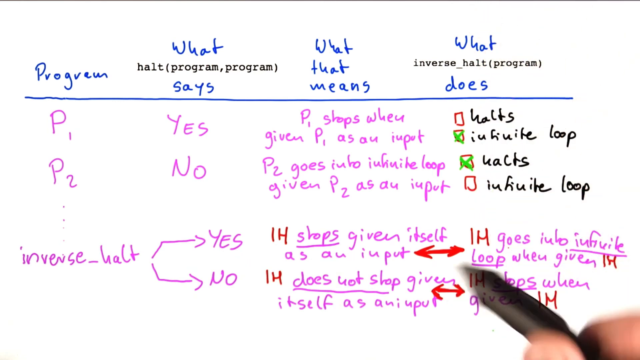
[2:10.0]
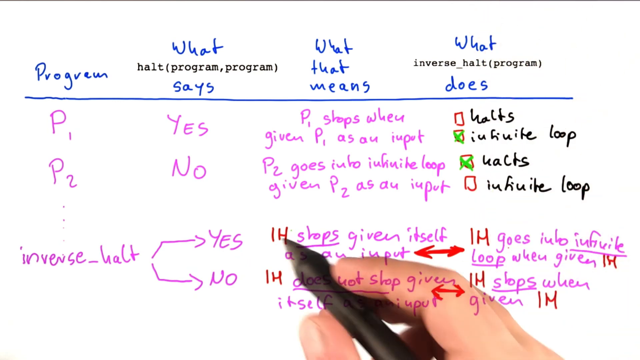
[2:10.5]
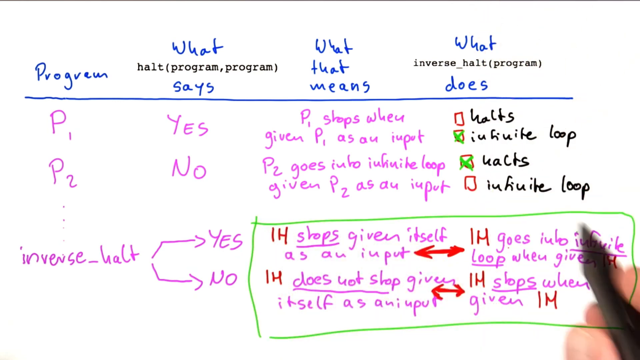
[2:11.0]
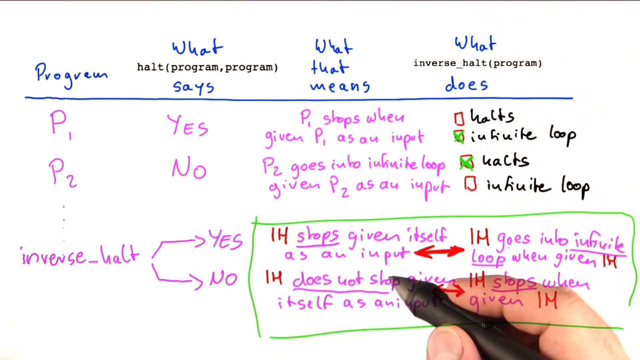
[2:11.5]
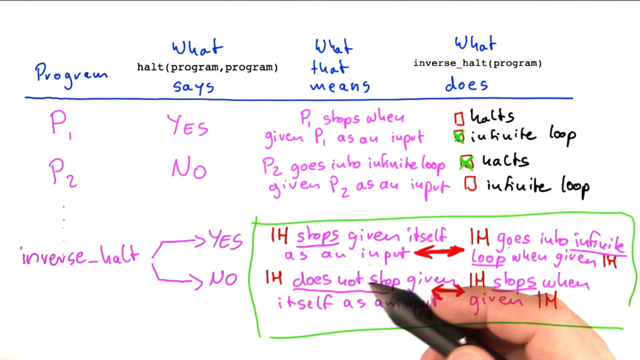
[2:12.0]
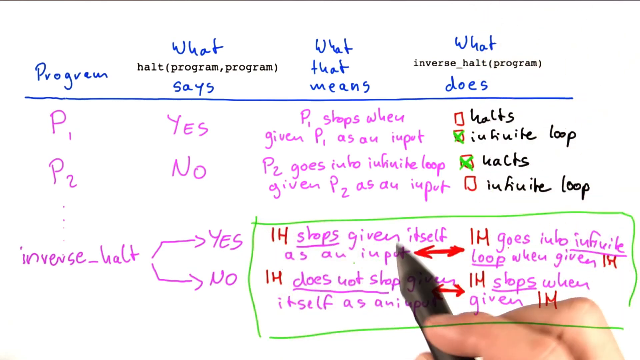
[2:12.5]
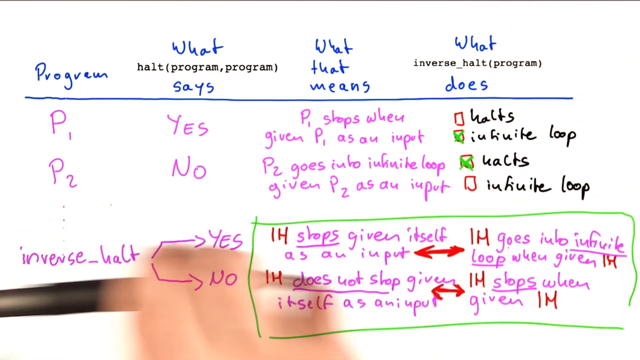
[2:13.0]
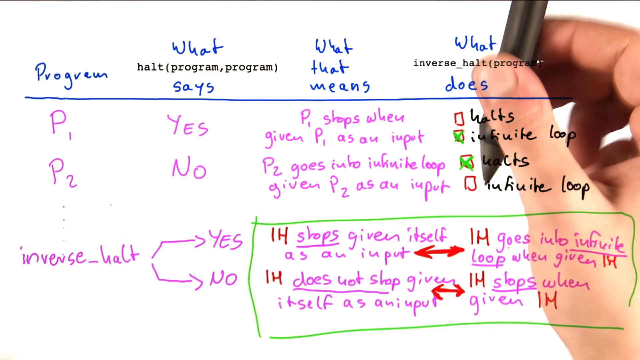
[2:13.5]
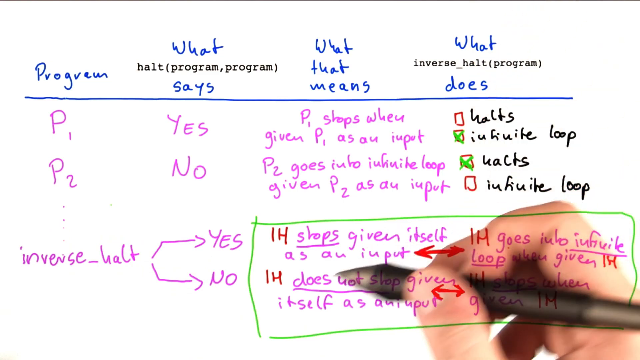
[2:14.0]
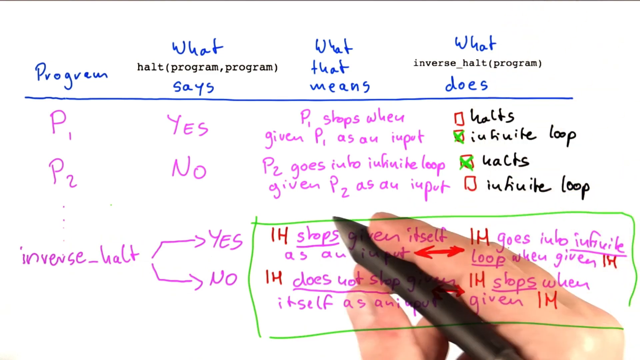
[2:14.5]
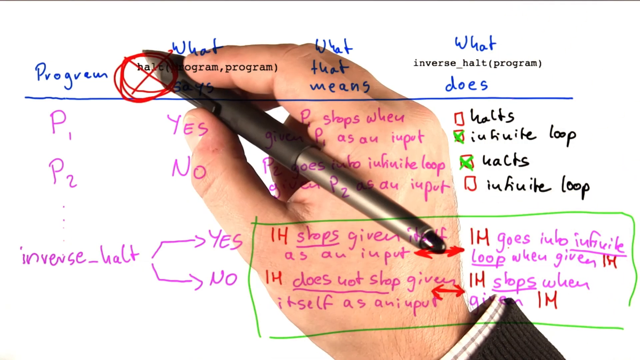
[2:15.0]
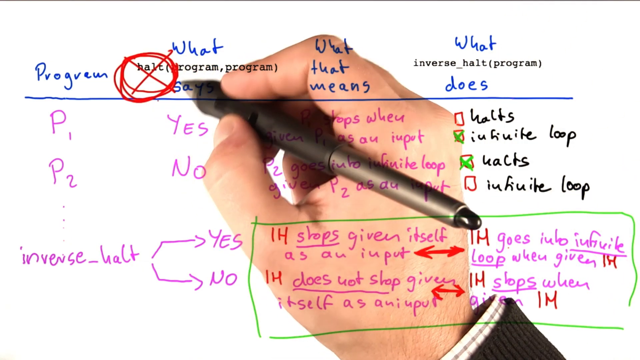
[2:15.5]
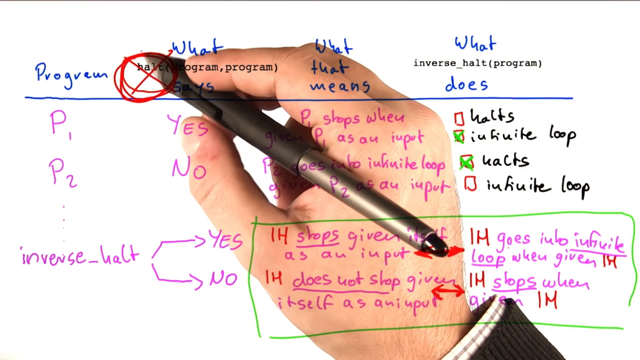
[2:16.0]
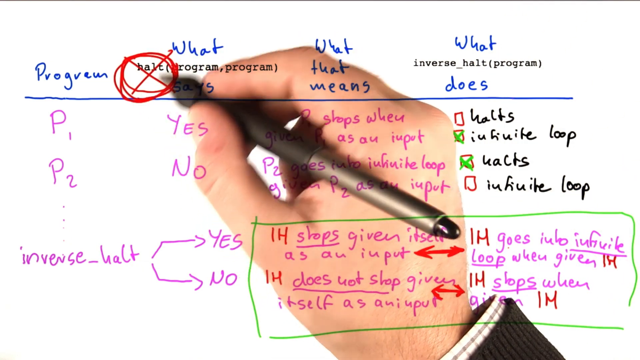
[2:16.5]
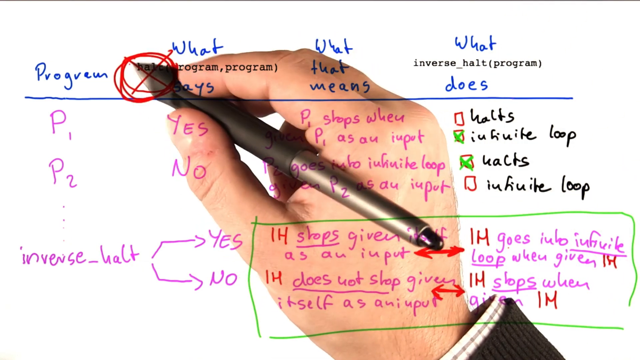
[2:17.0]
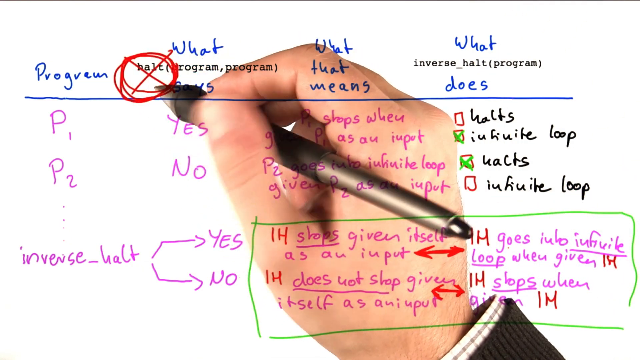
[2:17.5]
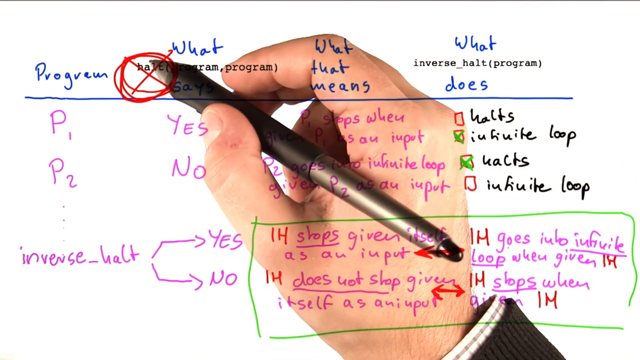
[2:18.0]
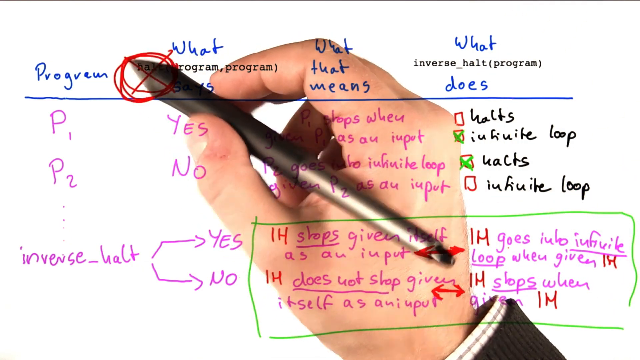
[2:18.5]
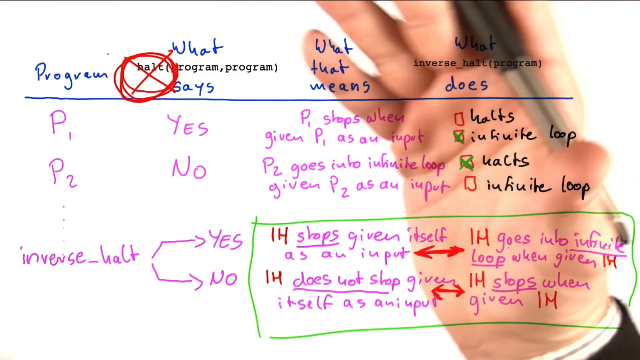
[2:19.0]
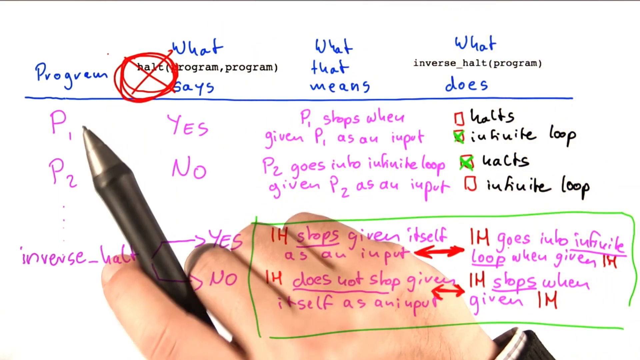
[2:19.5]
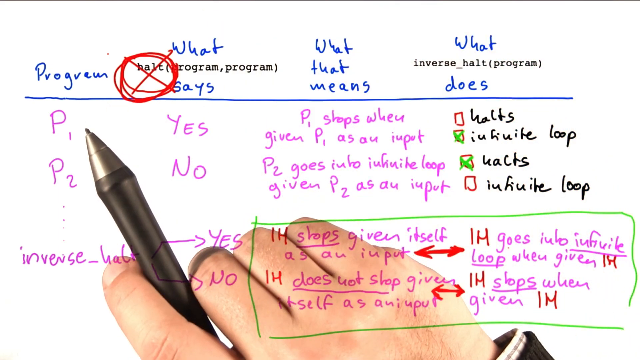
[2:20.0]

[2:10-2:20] A hand holding a pen moves across a whiteboard, emphasizing various parts. At the top are four categories: "program" on the left, then "what says", "what that means" and "what does". For P1 under program, what it says is yes and it shows an infinite loop; for P2 it says no and halts. Below is inverse_halt with two options, yes or no: for yes, IH goes into infinite loop when given IH, and for no, it halts. The person puts a green box around the bottom two categories in the inverse_halt row, then draws a red X and a circle between "program" and "what says".